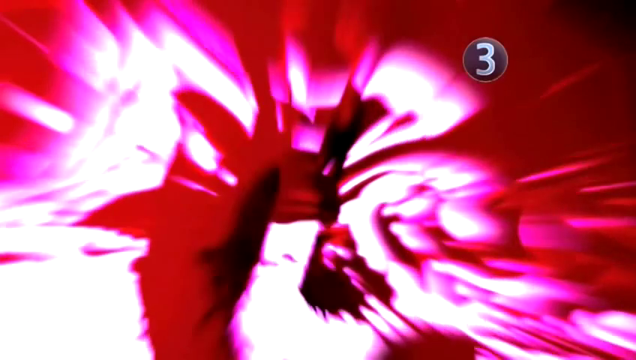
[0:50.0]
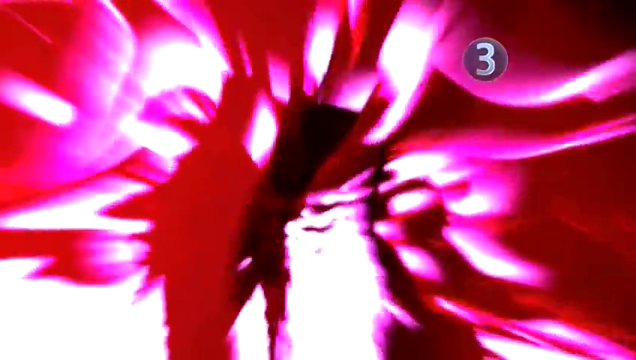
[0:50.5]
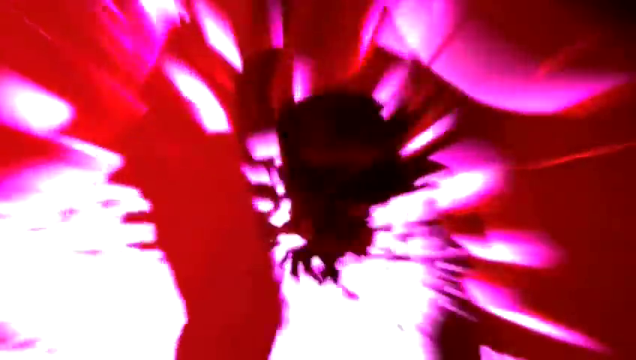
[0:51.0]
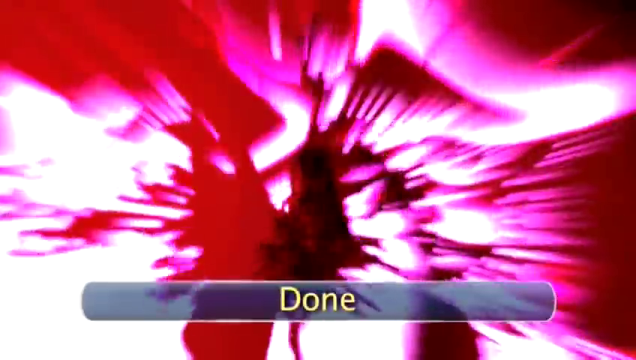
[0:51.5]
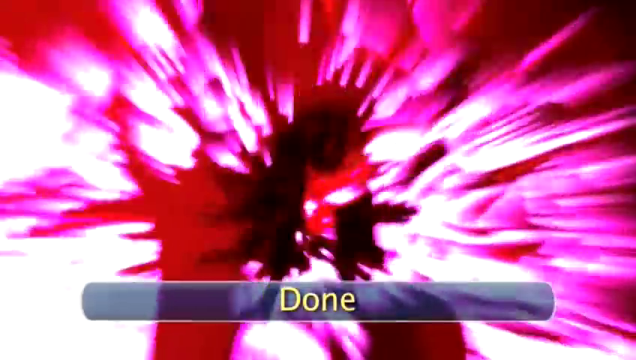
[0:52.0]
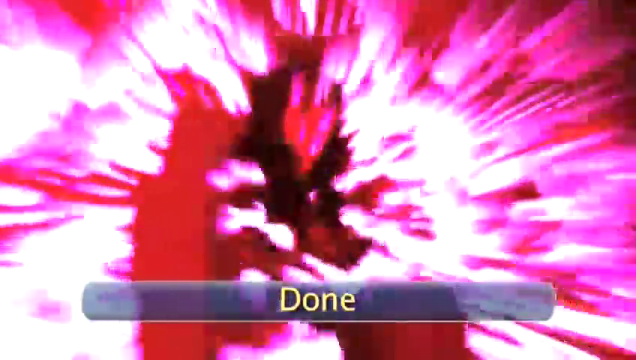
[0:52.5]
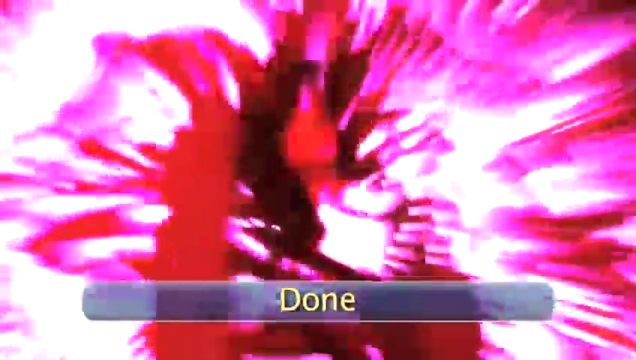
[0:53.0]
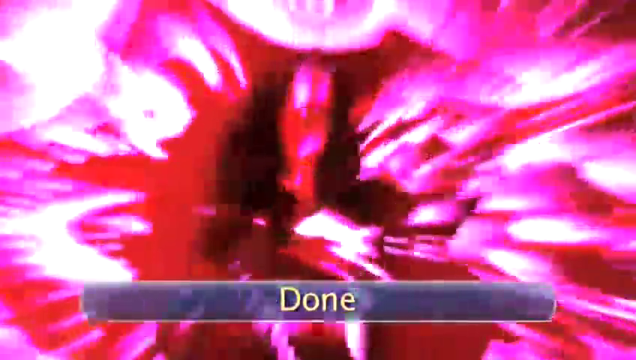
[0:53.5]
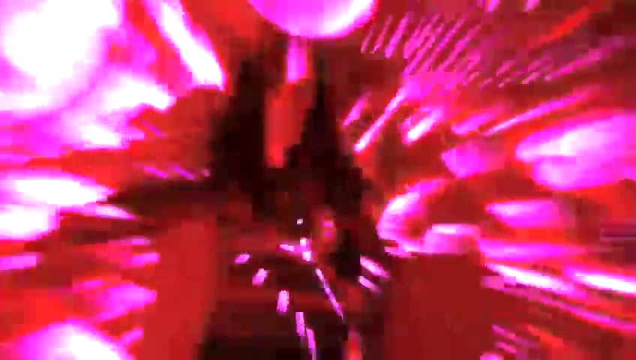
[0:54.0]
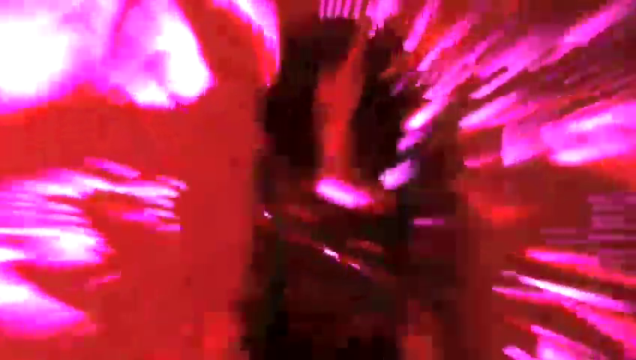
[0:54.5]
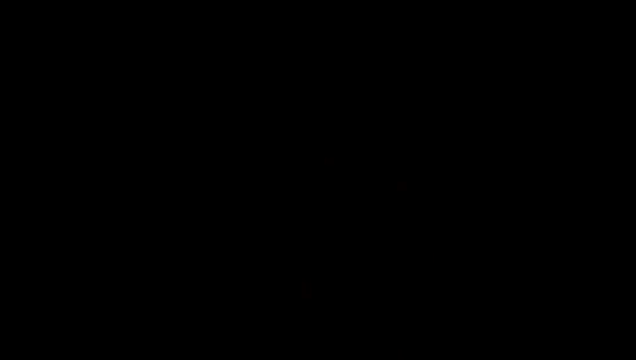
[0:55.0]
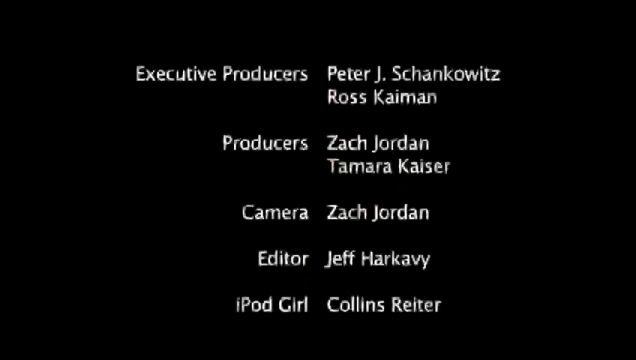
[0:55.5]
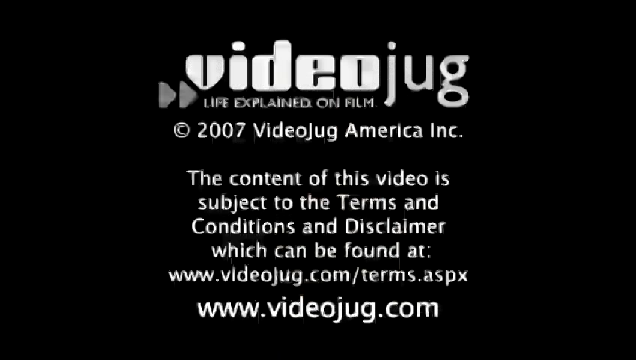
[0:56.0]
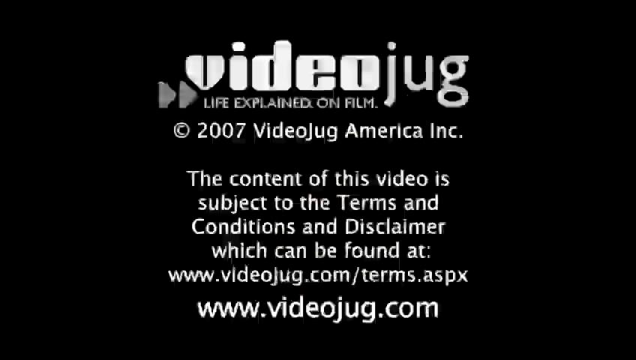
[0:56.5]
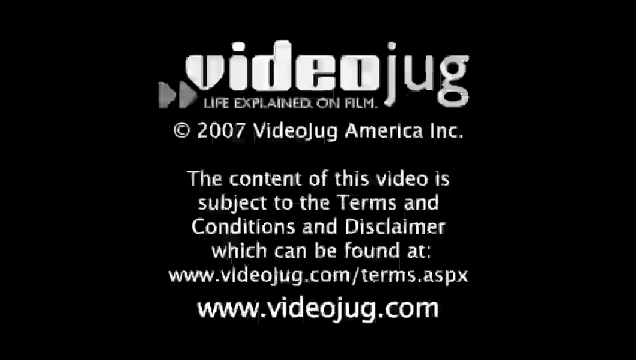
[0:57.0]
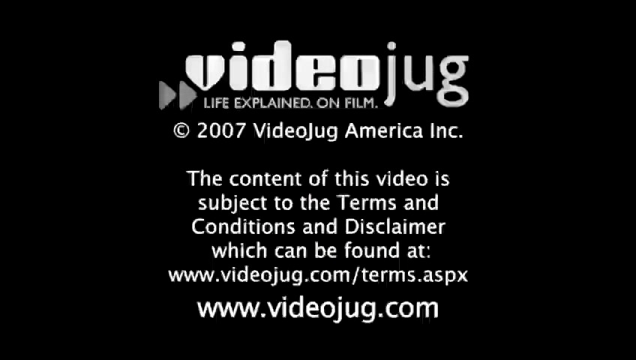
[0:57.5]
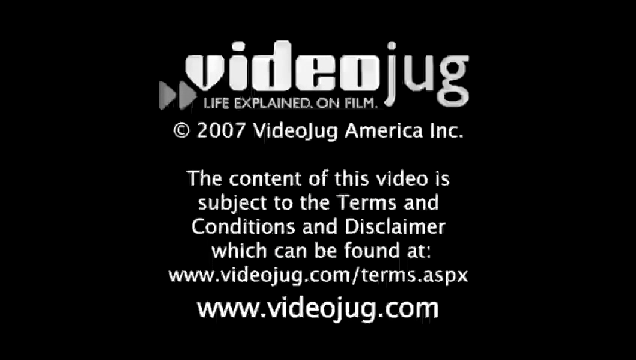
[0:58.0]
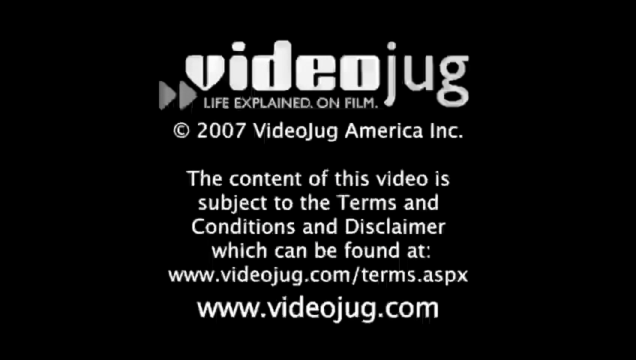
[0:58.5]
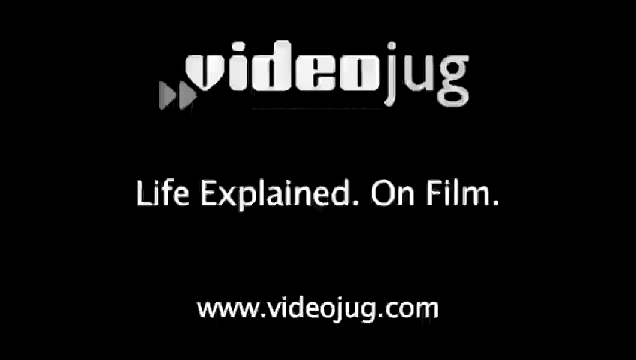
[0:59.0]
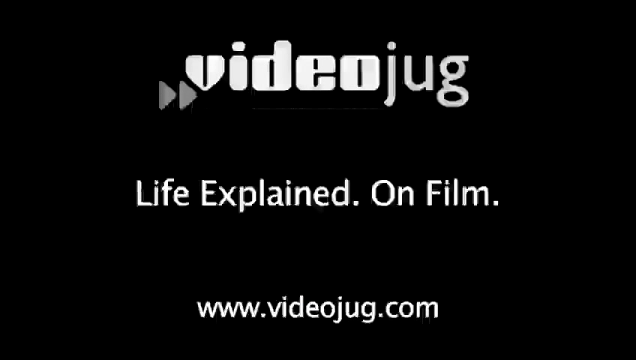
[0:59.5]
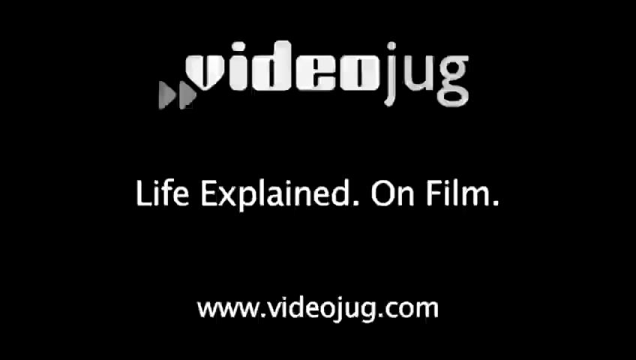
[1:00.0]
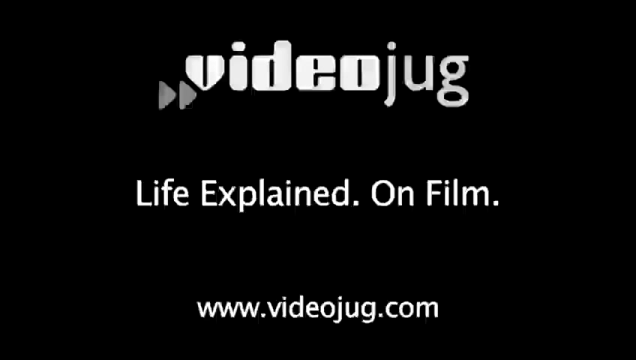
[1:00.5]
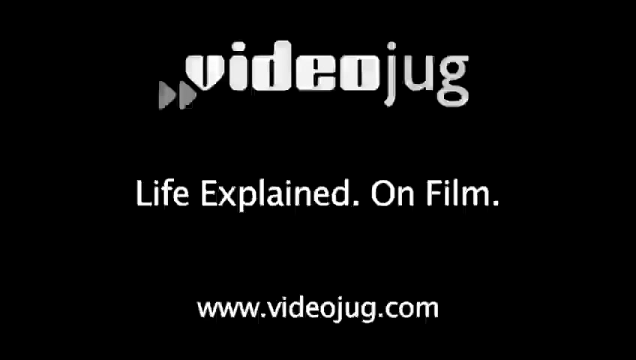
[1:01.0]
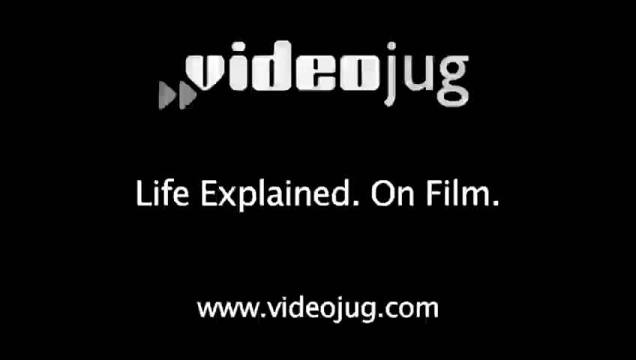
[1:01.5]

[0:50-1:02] A very bright, vivid red screen with lots of swirls and shapes appears, with the number three in the top right-hand corner. A girl with dark hair is dancing. The word "done" appears, and she dances. Closing credits follow, reading "Videojug life explained on film www.videojug.com", and the video finishes on that screen.